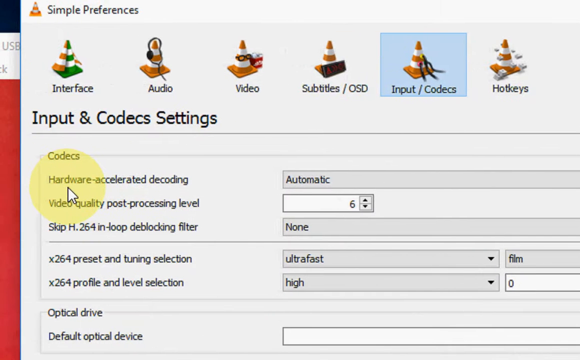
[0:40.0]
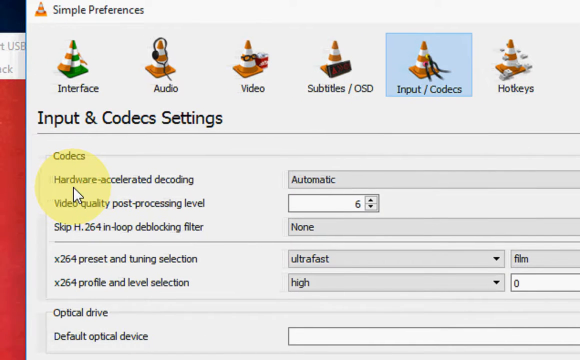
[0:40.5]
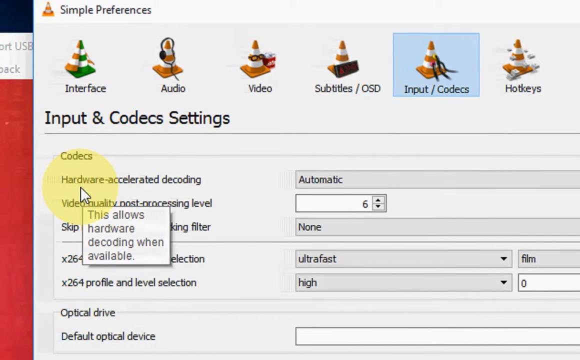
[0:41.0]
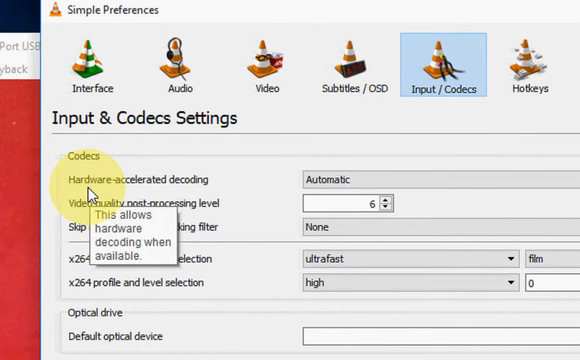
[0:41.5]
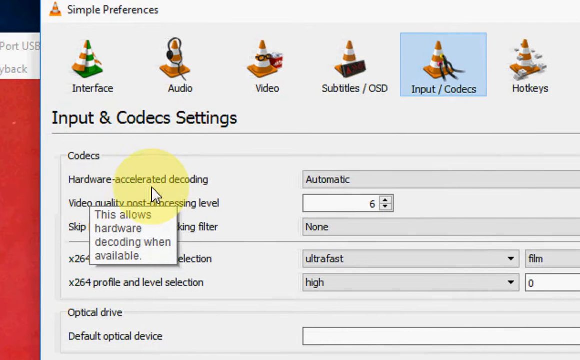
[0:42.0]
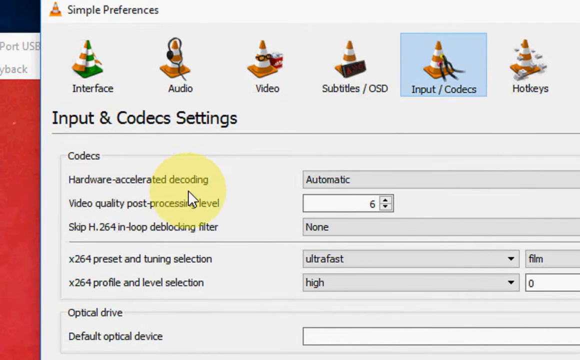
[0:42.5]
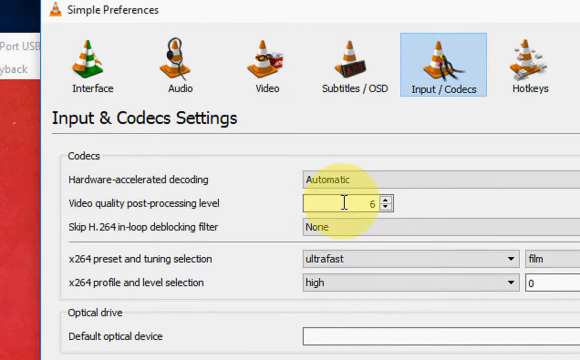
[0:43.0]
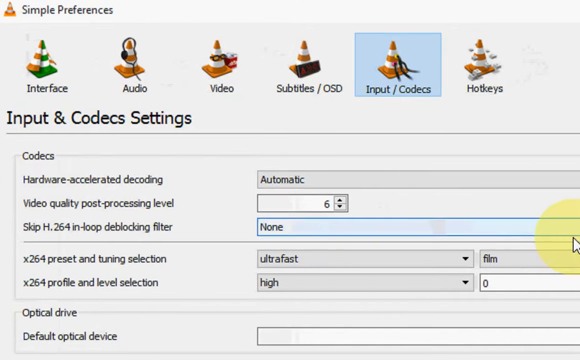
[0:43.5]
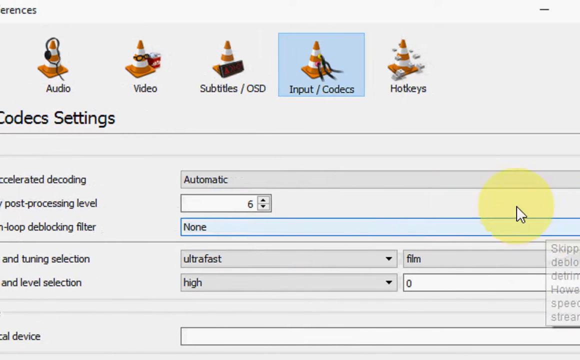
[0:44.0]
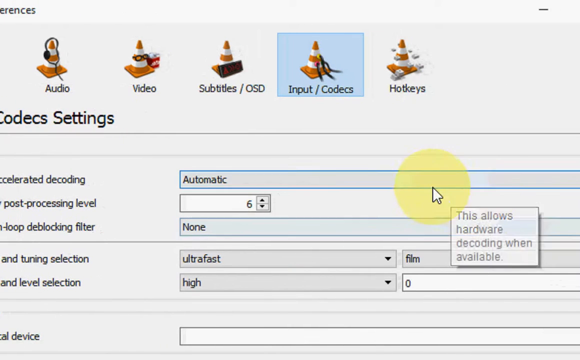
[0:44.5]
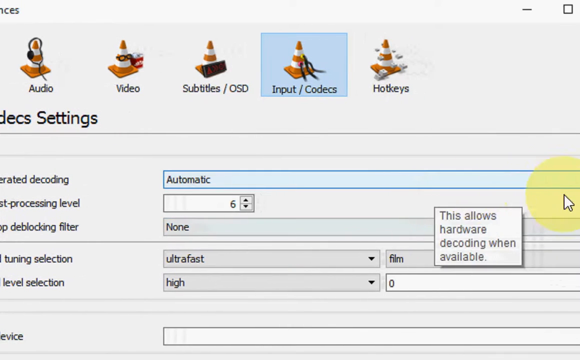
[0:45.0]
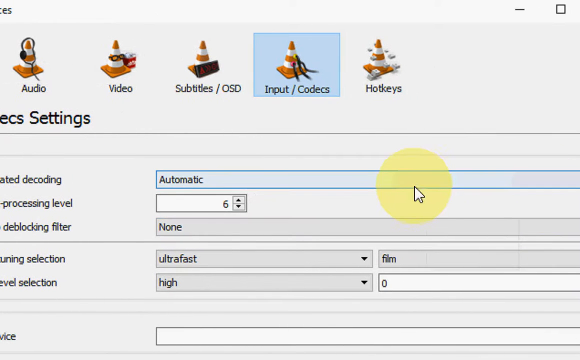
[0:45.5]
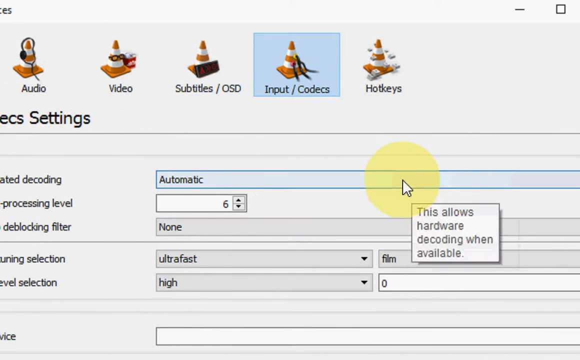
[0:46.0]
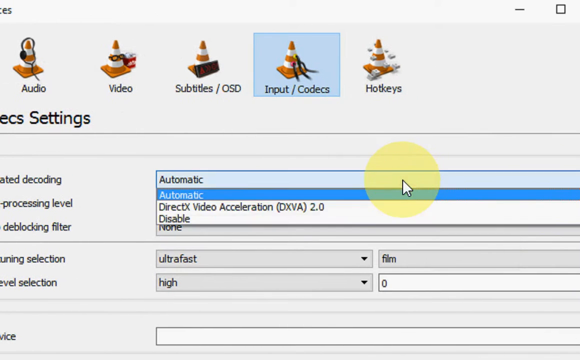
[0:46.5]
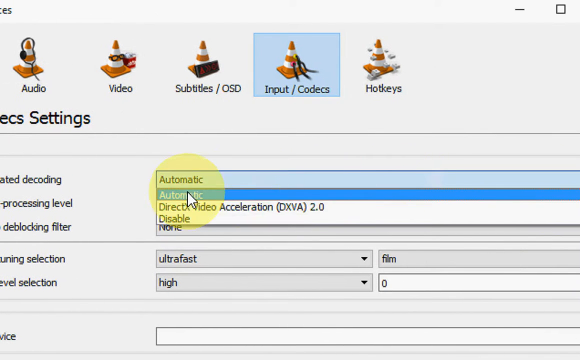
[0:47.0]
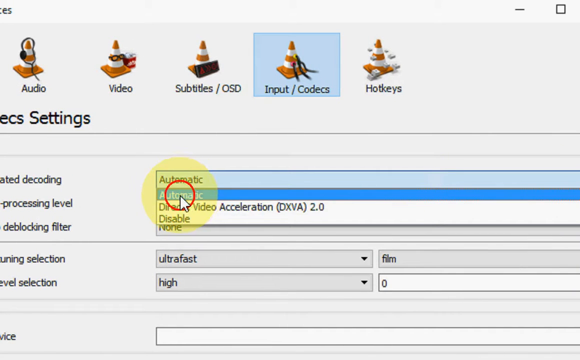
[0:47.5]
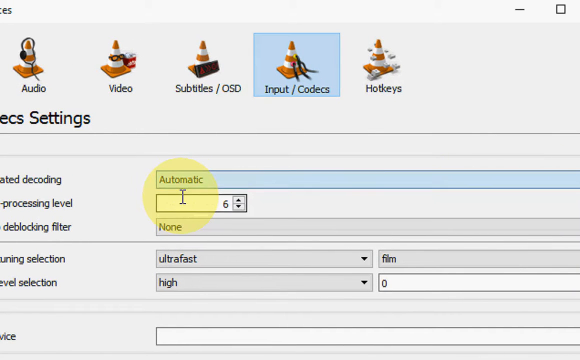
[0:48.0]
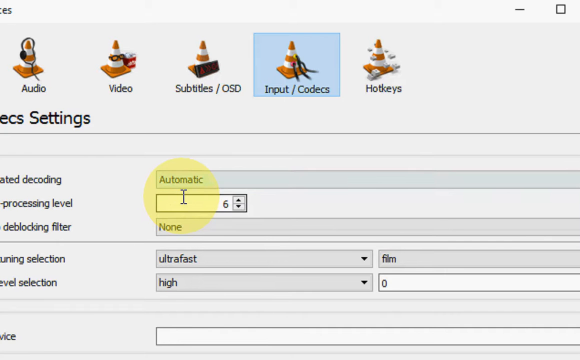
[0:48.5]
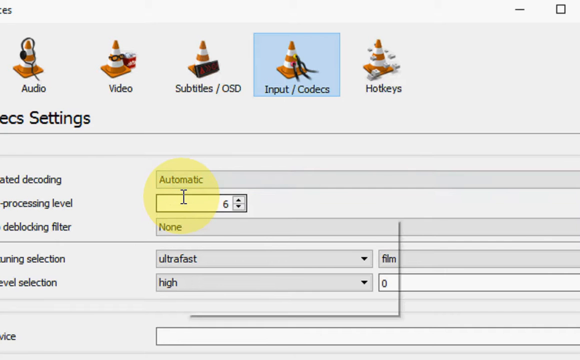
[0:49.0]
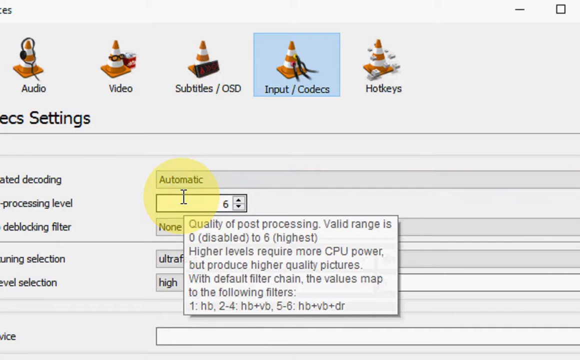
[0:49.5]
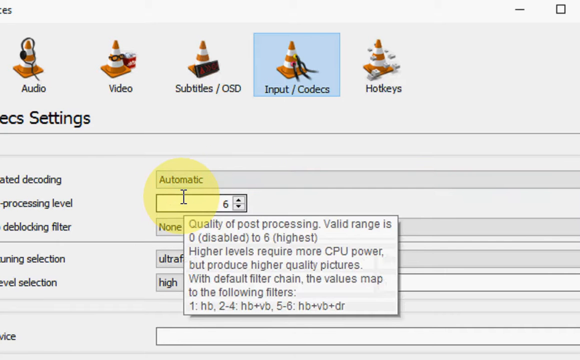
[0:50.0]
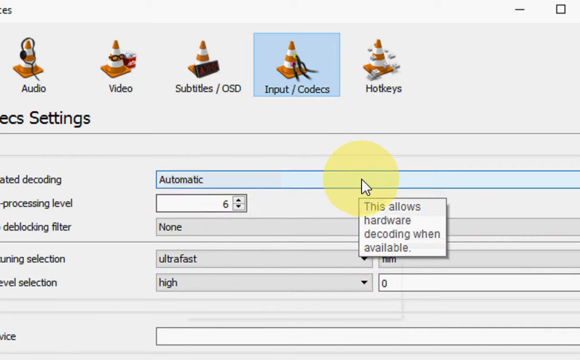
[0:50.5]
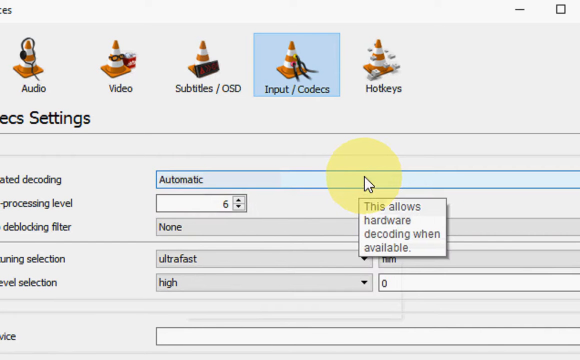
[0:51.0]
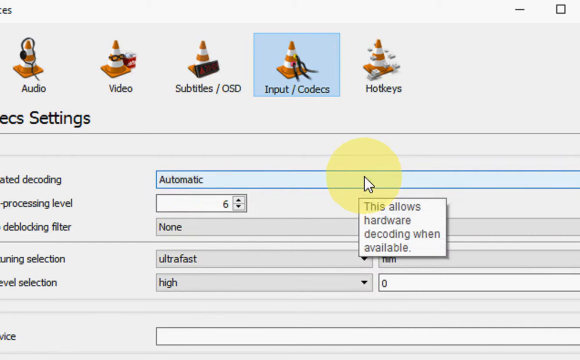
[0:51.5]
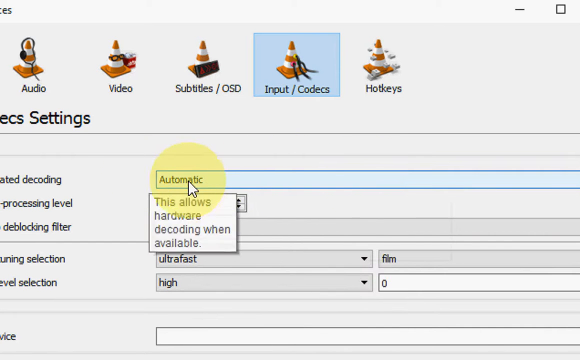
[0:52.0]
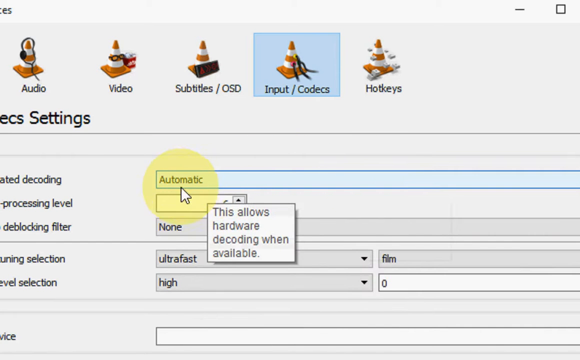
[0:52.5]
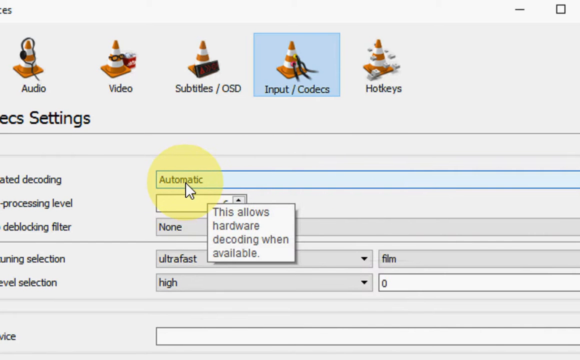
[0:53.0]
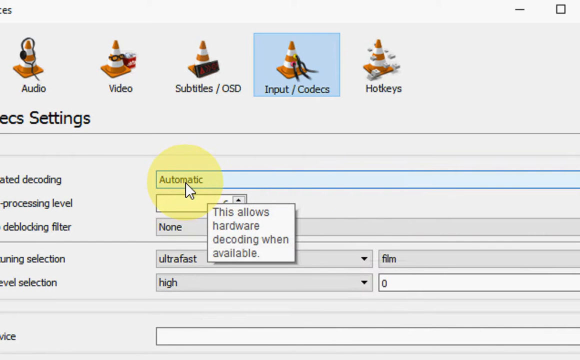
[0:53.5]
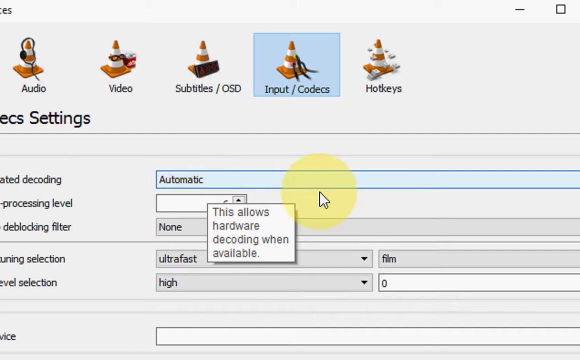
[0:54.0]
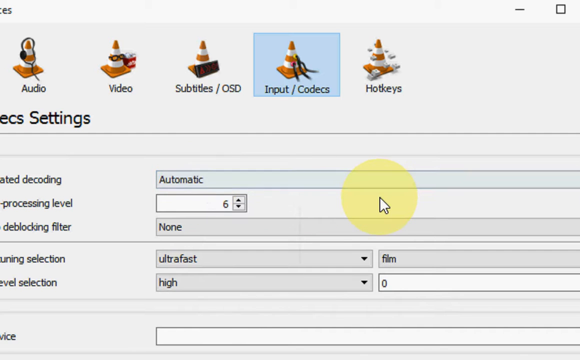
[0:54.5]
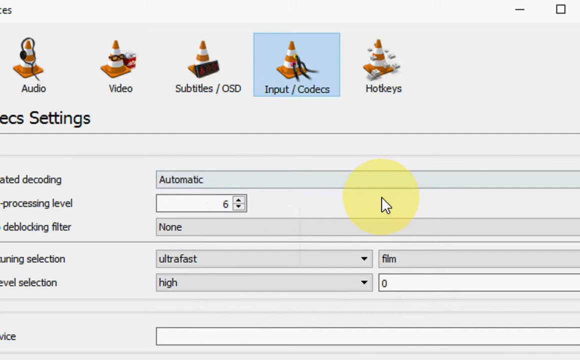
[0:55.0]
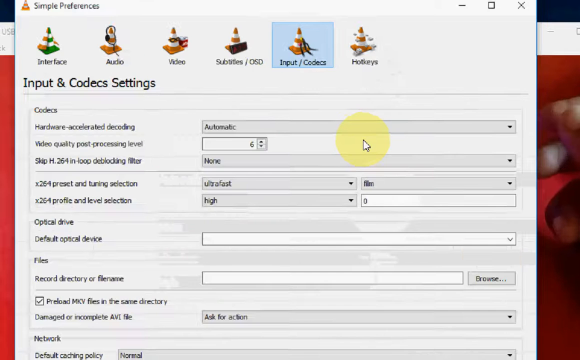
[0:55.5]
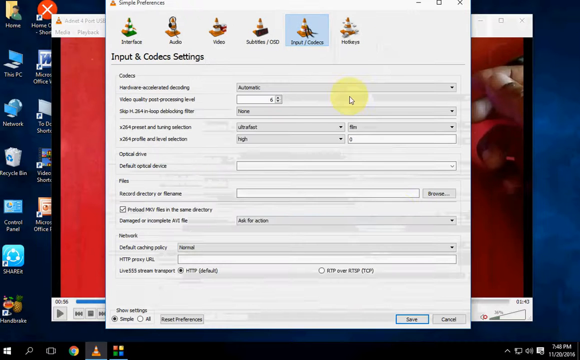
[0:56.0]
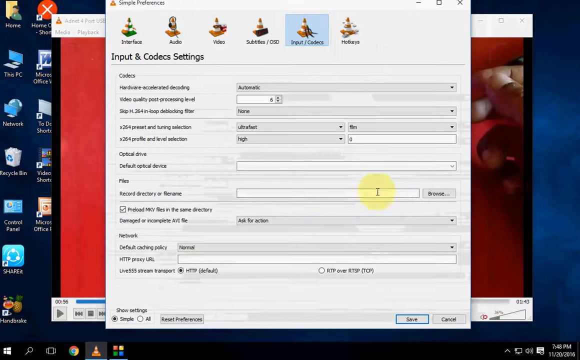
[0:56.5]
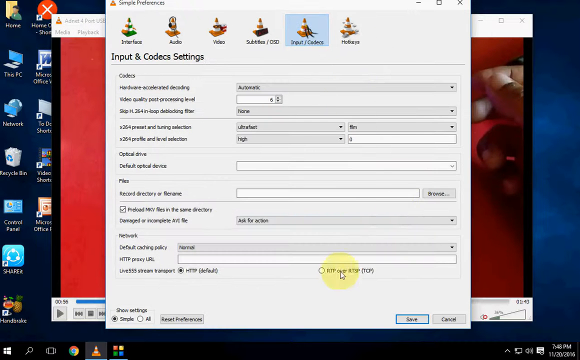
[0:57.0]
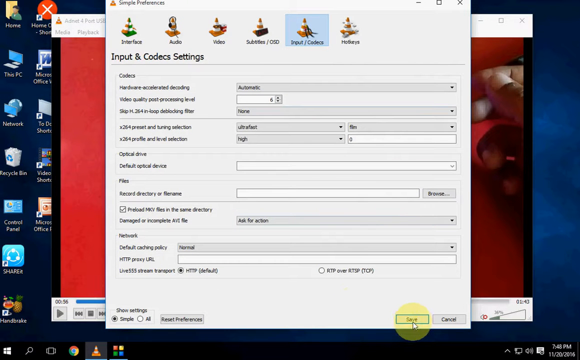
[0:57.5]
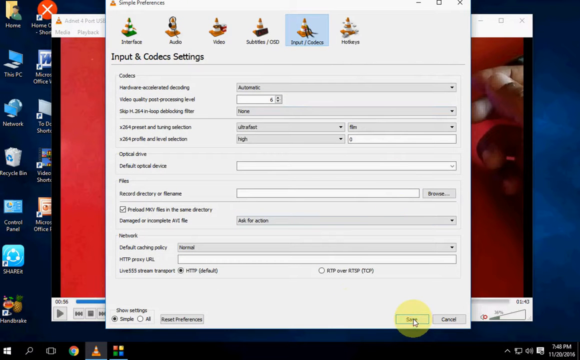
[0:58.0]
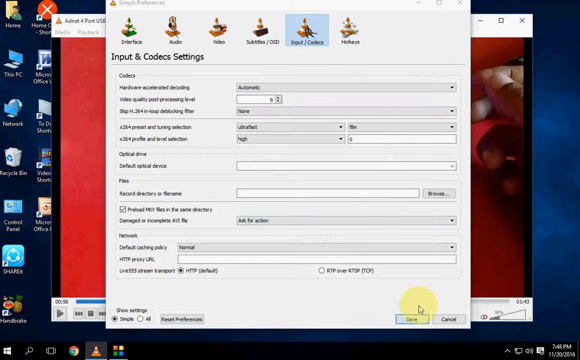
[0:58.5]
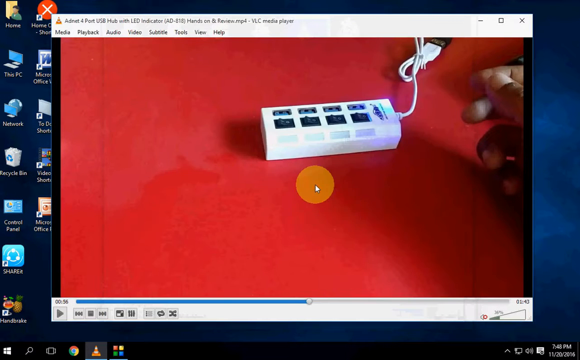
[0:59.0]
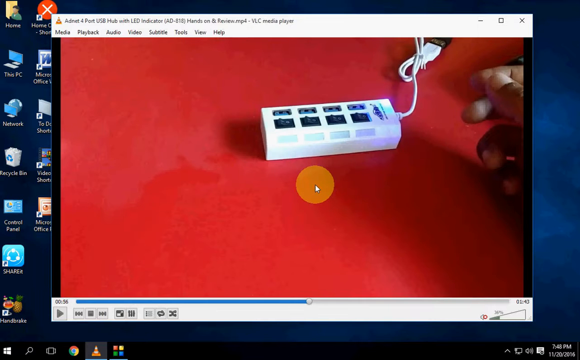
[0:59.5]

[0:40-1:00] The mouse hovers over the first option in the codec section, which says "hardware accelerated decoding", with the current setting "automatic". Hovering over this line brings up a box that says "this allows hardware decoding when available". The mouse moves all the way to the right and selects the drop-down box currently showing "automatic", revealing two more options: "direct x video acceleration 2.0" and "disable". The mouse then clicks on "automatic", and a box following the mouse appears at the top saying "this allows hardware decoding when available". The view zooms back out to the whole desktop, and the mouse moves to the very bottom of the window and clicks the Save button, with a red circle appearing around the cursor. The window disappears, returning to the video shown in the VLC window, and the zoomed-out view shows the icons on the desktop.